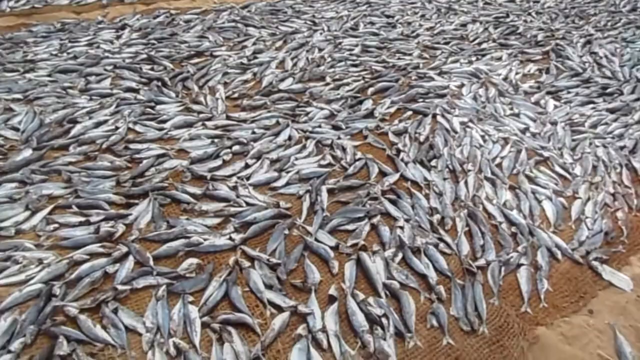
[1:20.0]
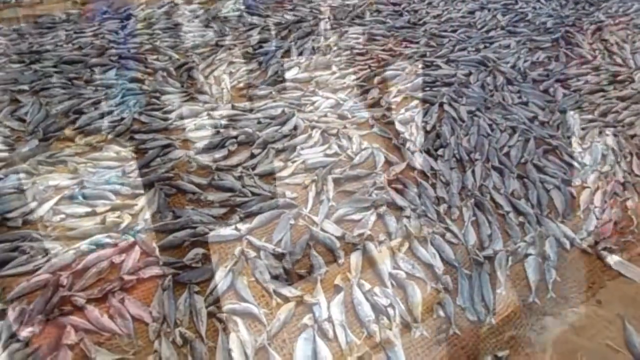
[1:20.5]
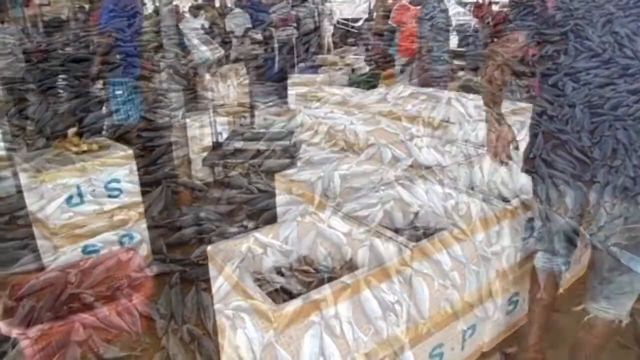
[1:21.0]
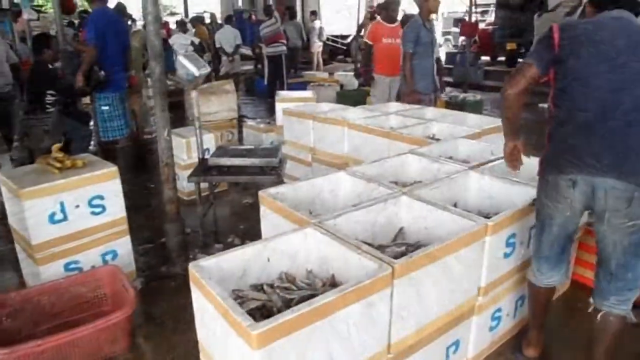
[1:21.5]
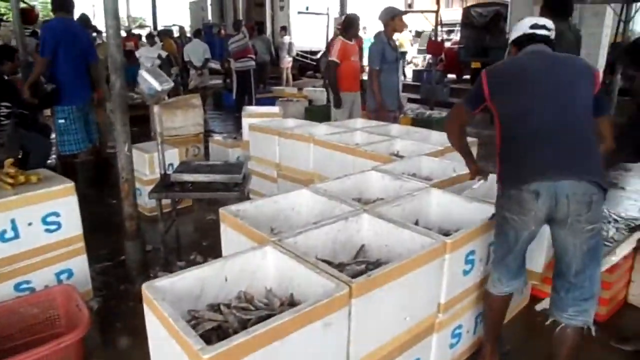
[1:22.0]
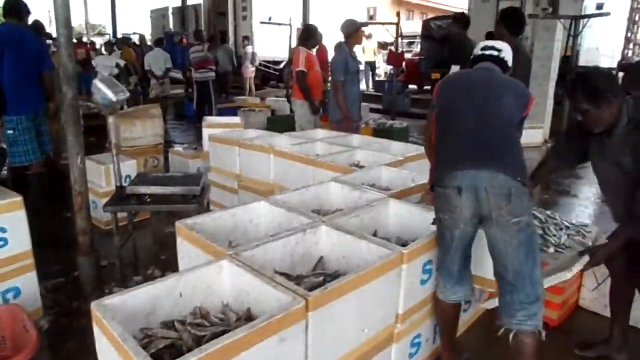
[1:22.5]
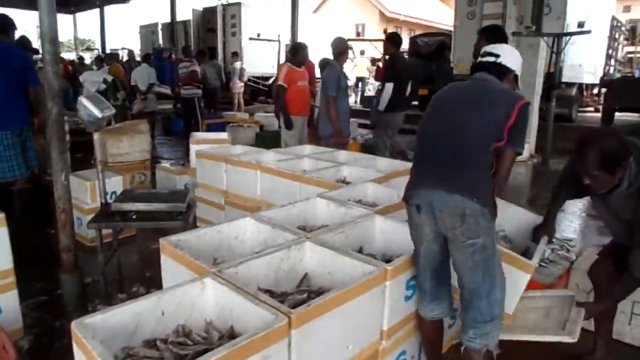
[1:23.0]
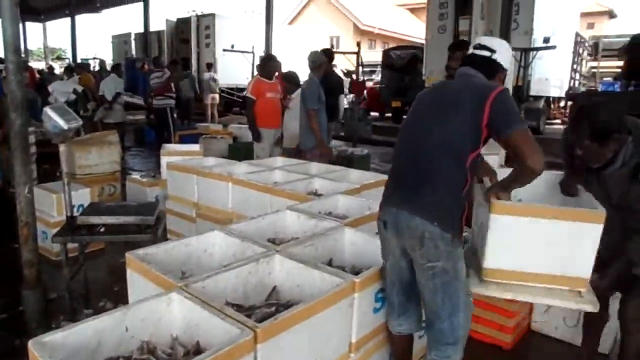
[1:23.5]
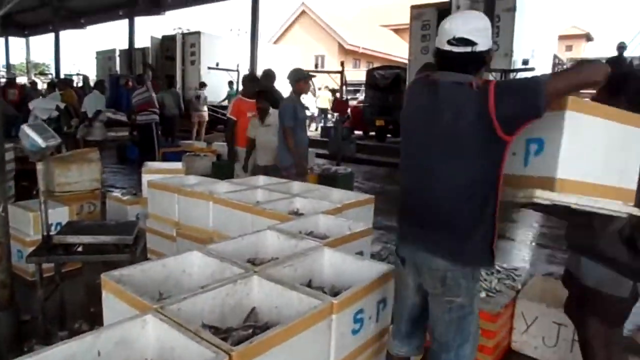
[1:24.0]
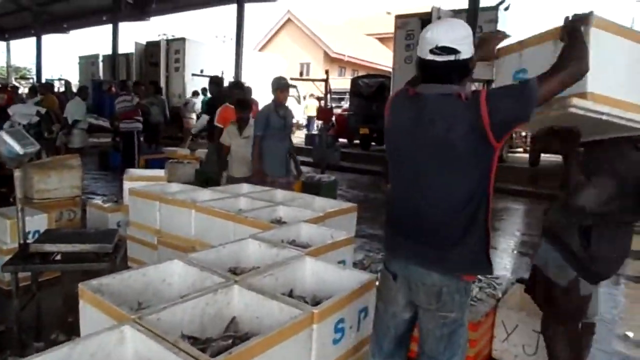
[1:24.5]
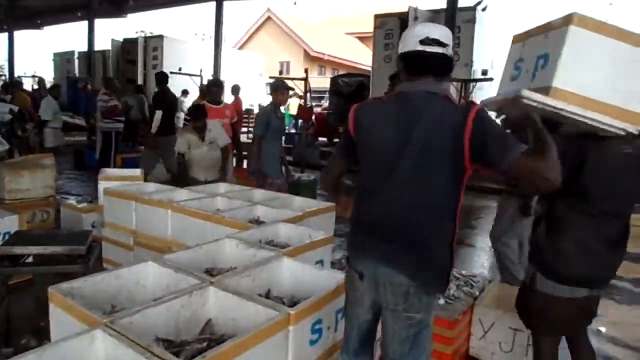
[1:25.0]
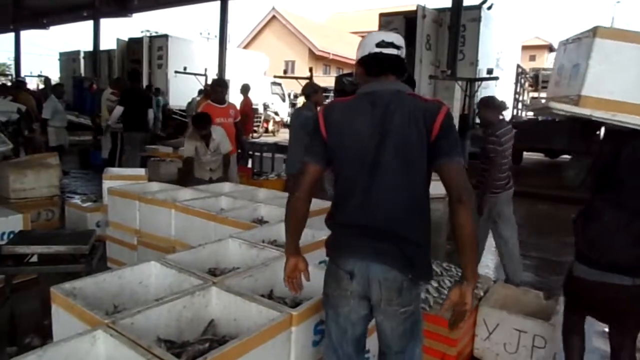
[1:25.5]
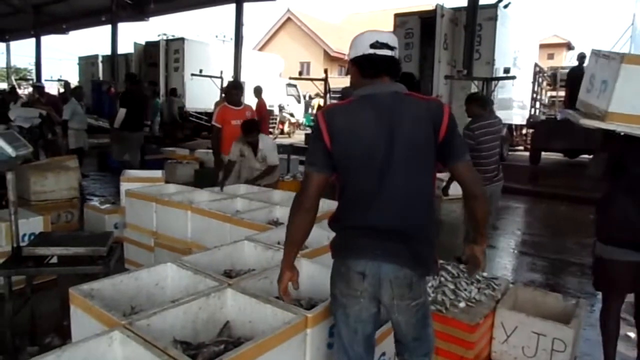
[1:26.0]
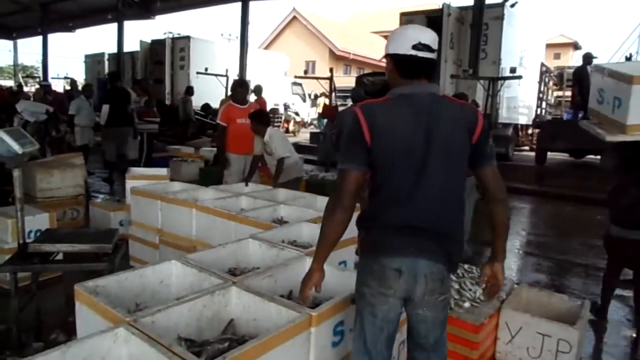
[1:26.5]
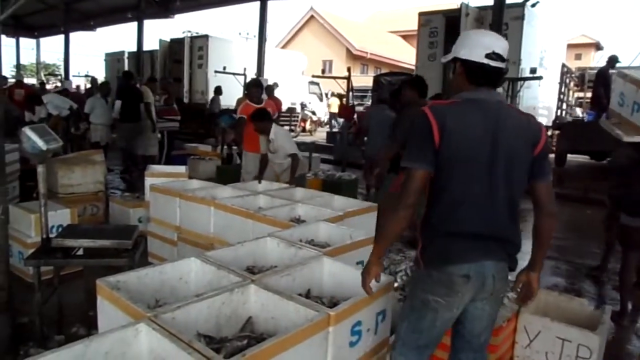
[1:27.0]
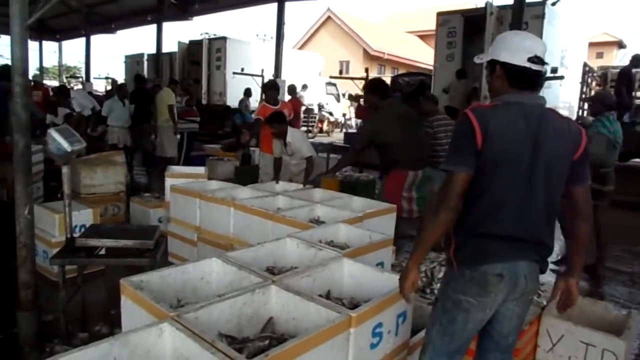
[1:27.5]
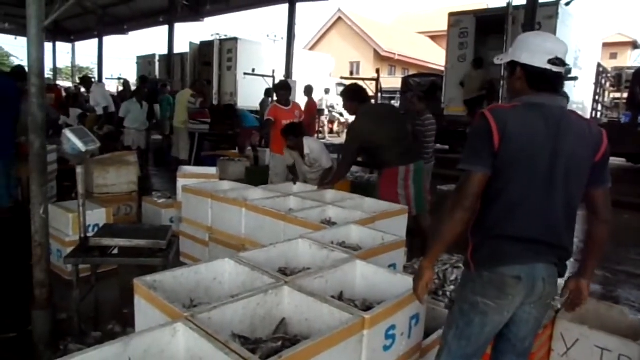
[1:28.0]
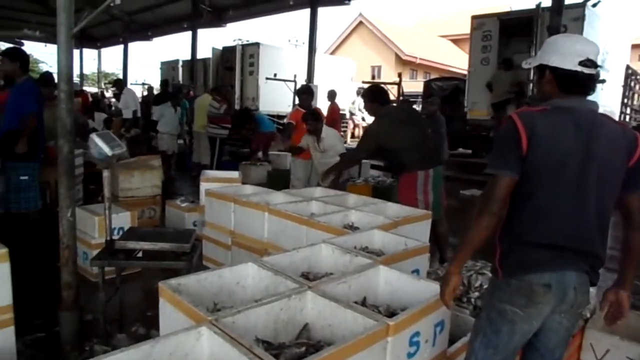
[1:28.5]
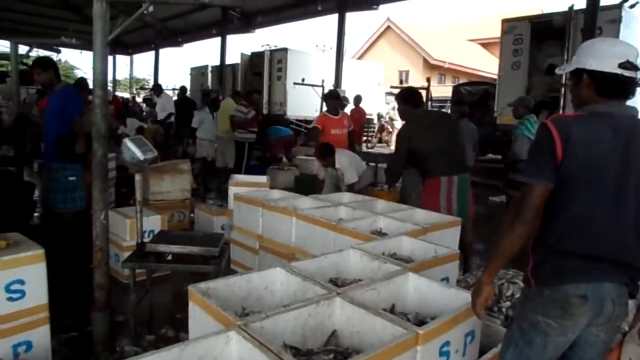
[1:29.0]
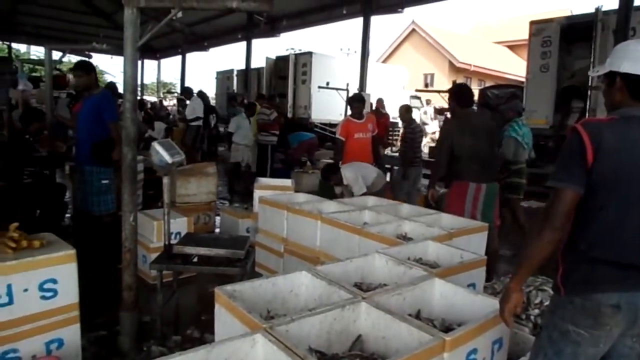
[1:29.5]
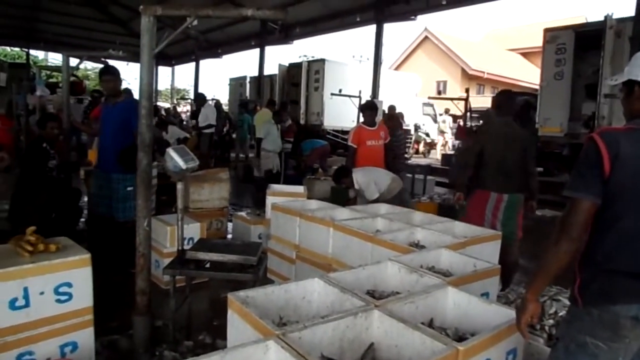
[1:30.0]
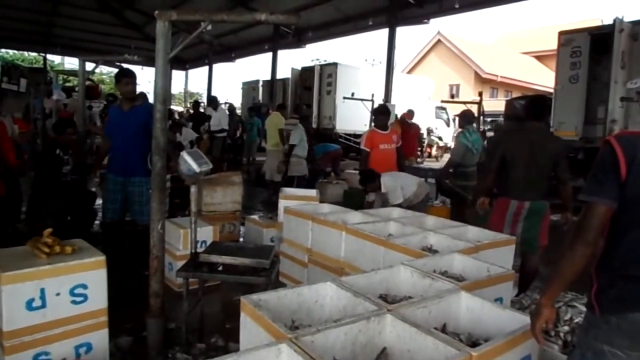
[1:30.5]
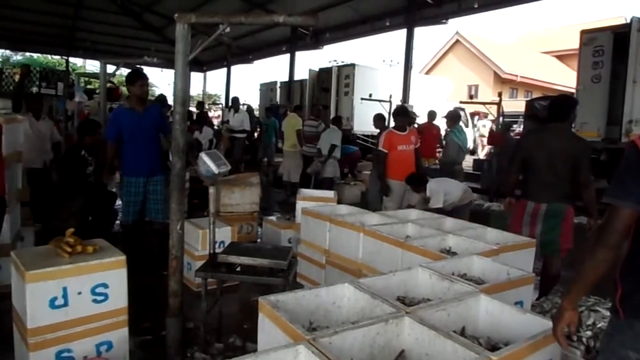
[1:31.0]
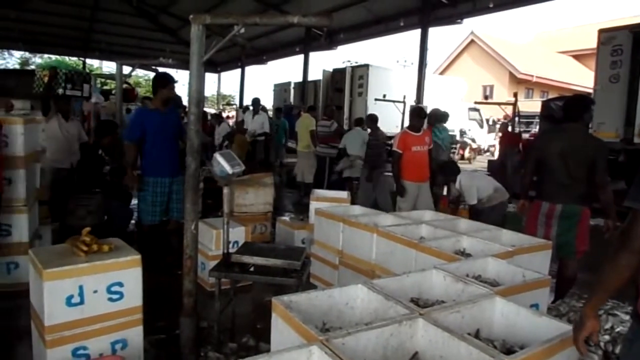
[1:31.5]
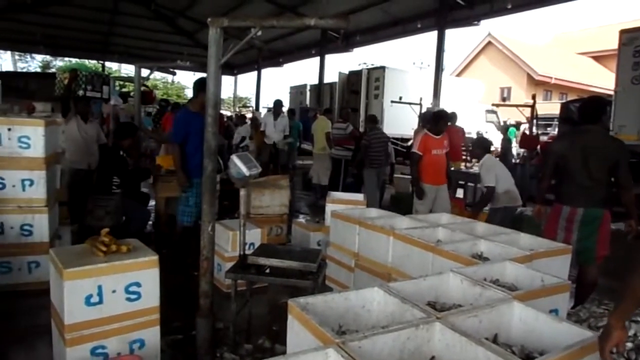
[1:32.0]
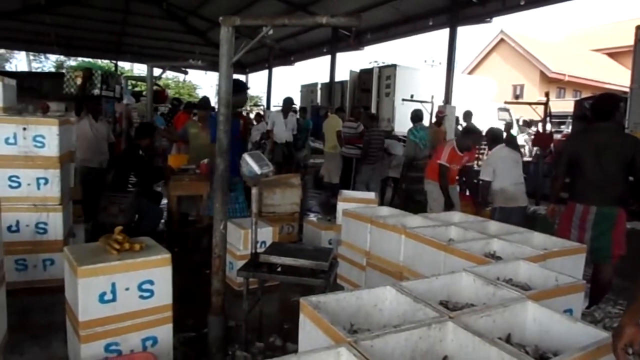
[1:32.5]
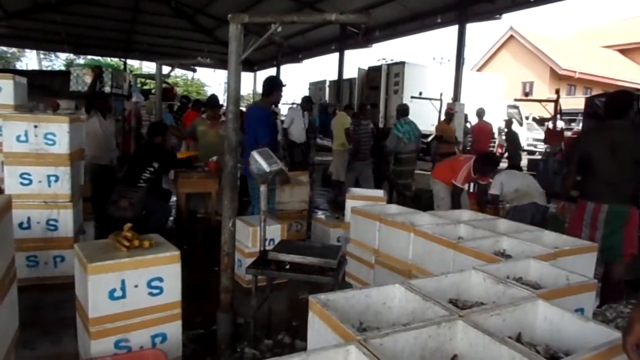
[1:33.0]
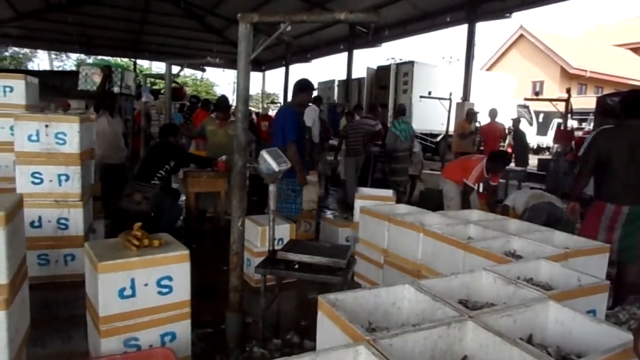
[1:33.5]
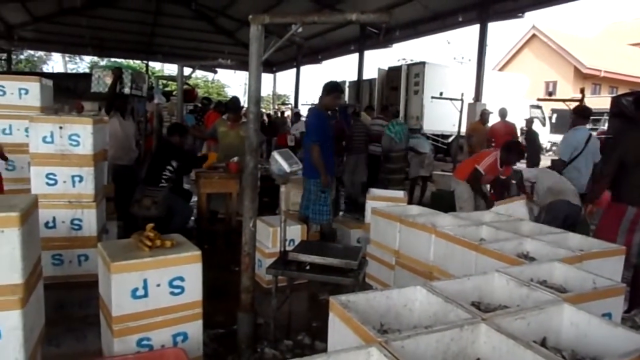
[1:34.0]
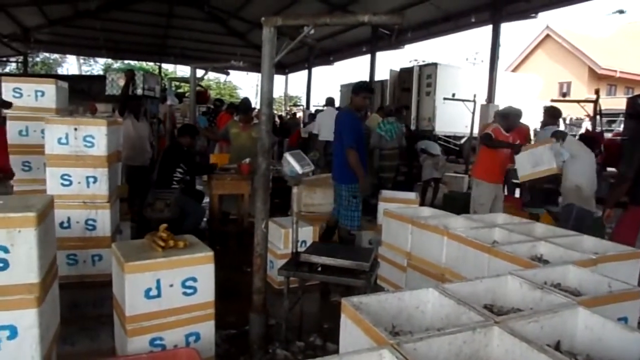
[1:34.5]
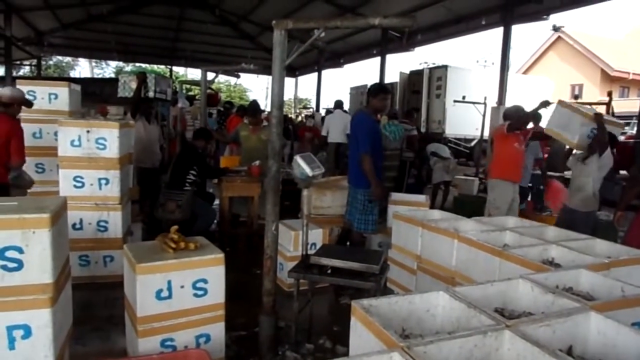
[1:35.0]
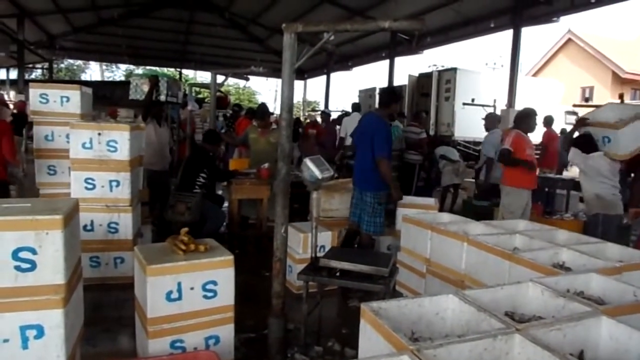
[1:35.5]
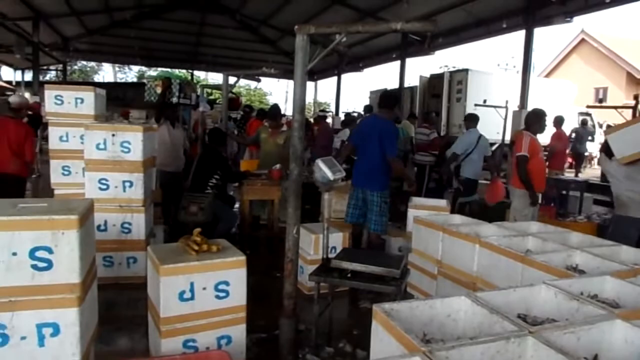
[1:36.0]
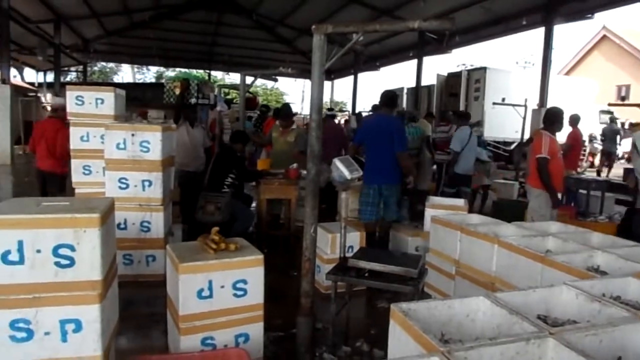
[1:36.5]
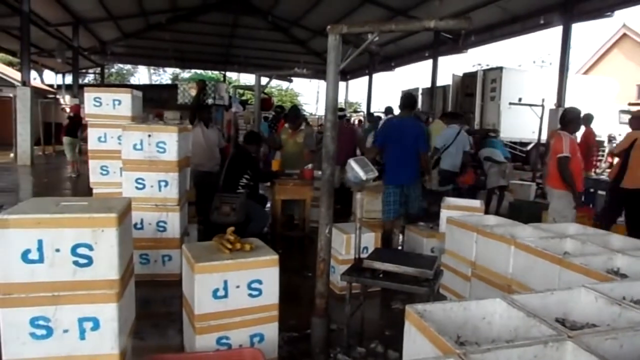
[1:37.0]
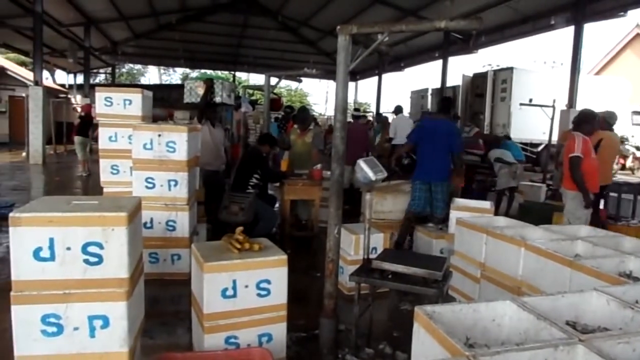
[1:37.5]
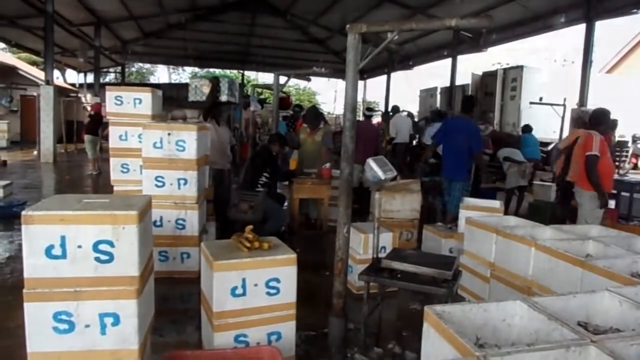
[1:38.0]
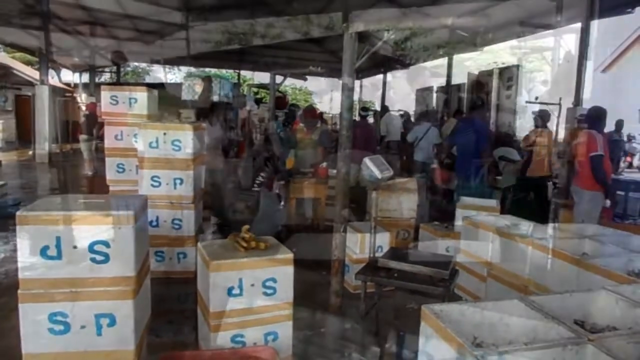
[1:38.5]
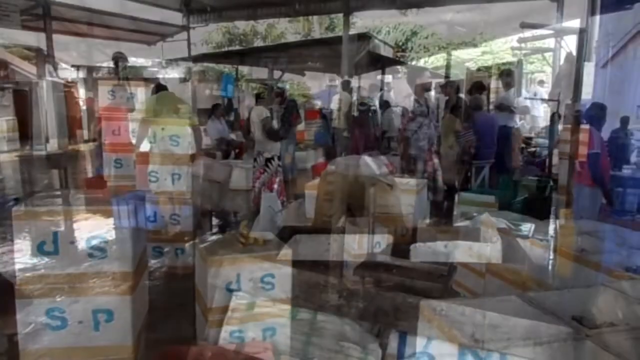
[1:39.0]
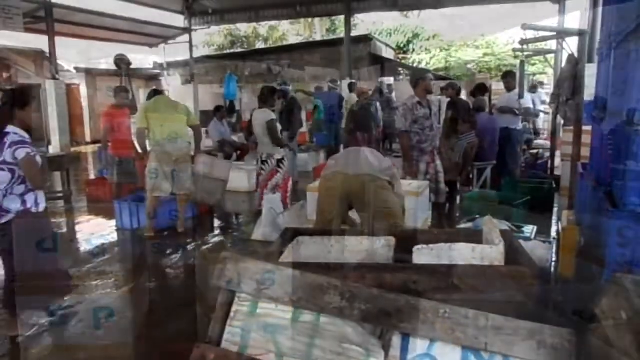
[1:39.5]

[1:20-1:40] The scene fades to a market with big styrofoam bins, all full of fish, likely the fish from the tarps. A few people move the bins around. The market is outdoors but under a canopy, giving a farmer's market feel, and many people are there. The bins look like they have packing tape on them with the letters "SP." People walk around, picking up bins and lifting them onto their shoulders. One of the main men wears blue jean shorts, a blue and white striped t-shirt and a white hat. At least about 15 bins of fish are laid out to the public, and when the camera pans to the left, a stack of at least 20 more bins appears, probably also filled with fish. The scene then fades to a different angle of the market.